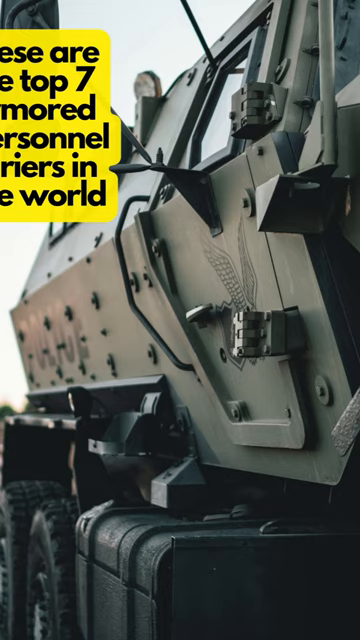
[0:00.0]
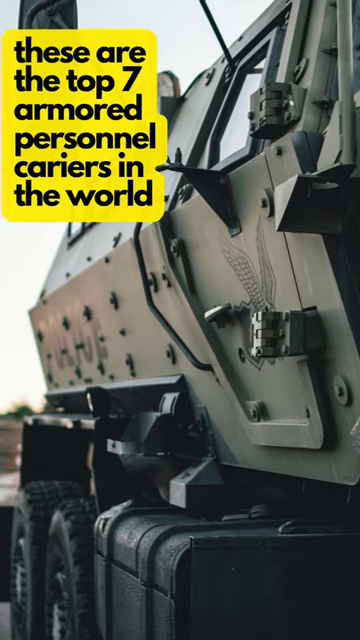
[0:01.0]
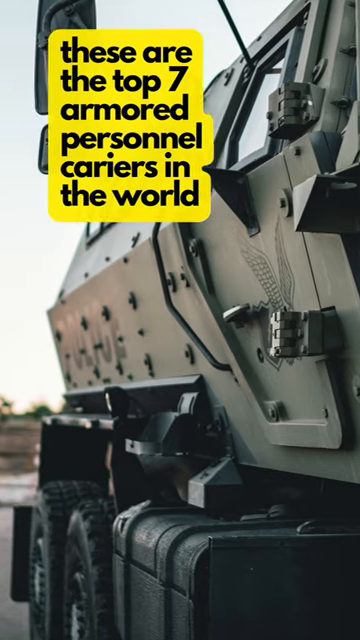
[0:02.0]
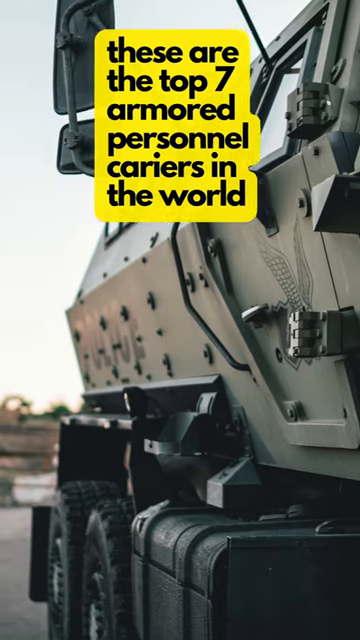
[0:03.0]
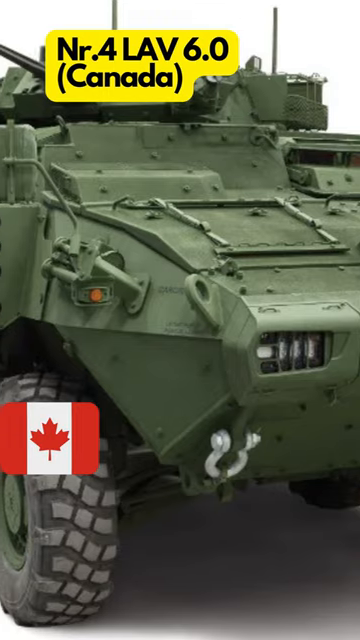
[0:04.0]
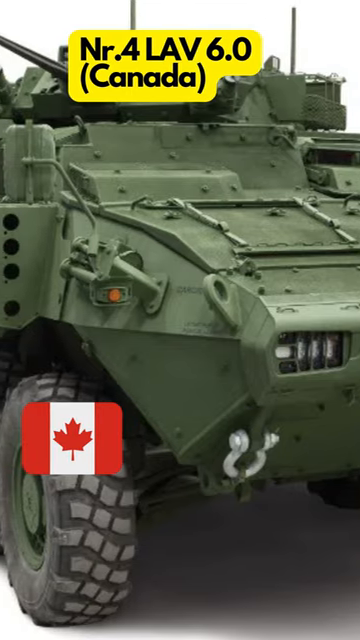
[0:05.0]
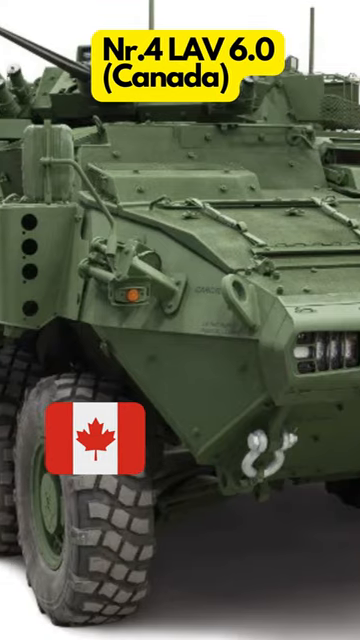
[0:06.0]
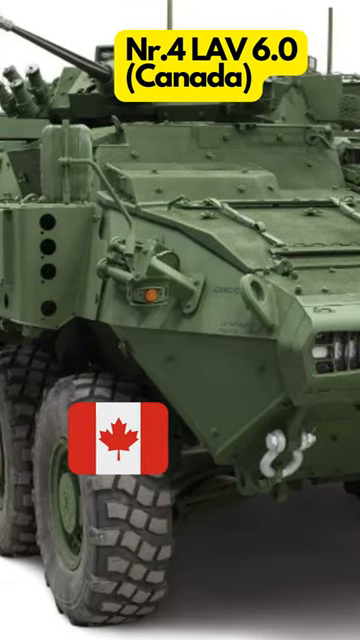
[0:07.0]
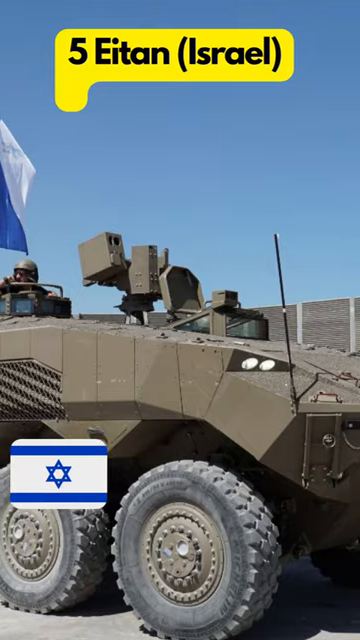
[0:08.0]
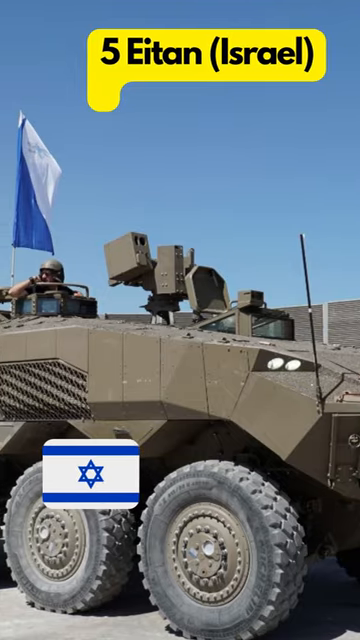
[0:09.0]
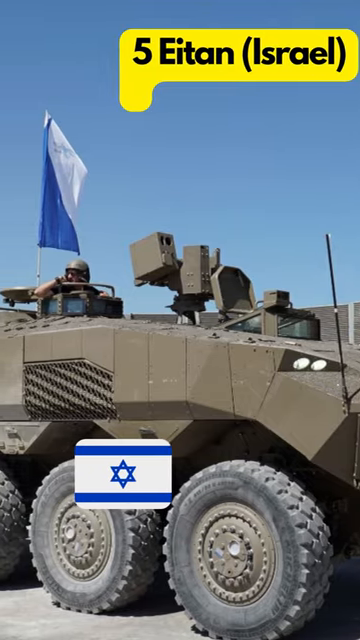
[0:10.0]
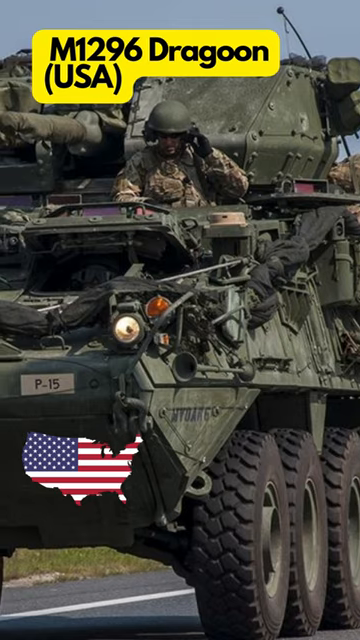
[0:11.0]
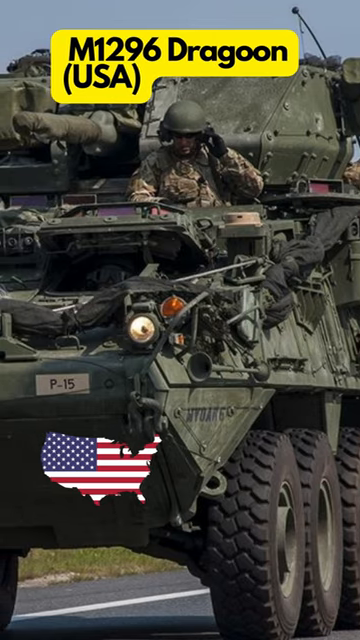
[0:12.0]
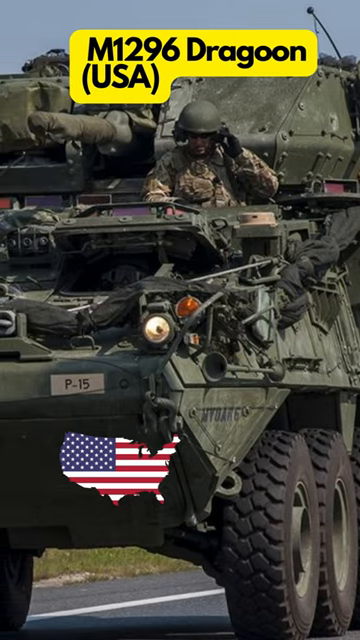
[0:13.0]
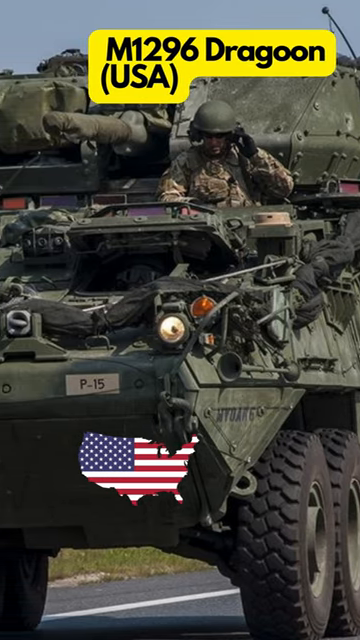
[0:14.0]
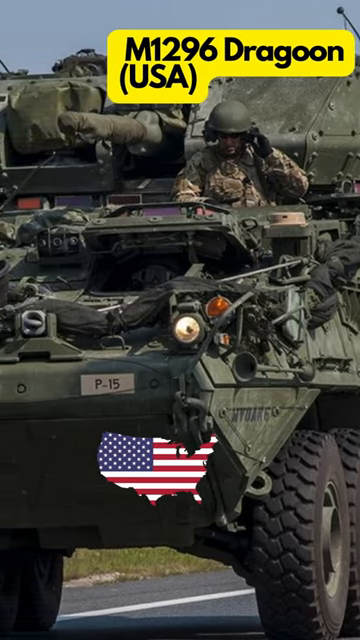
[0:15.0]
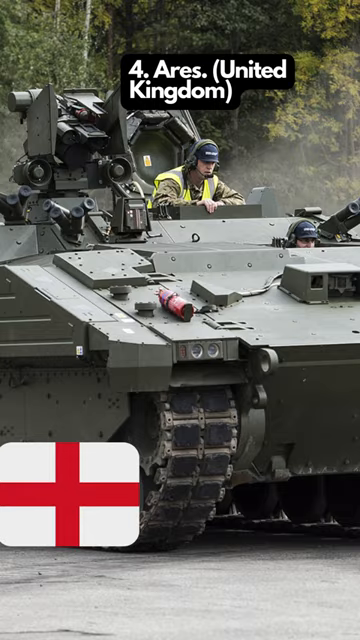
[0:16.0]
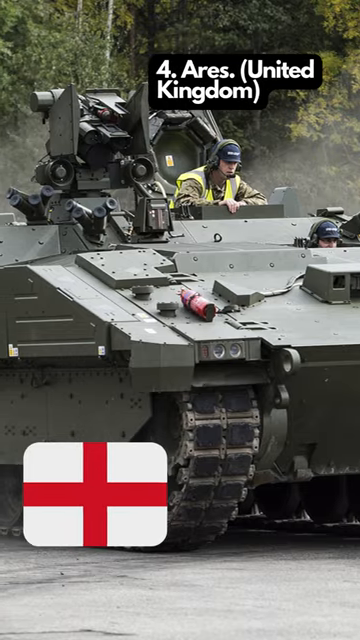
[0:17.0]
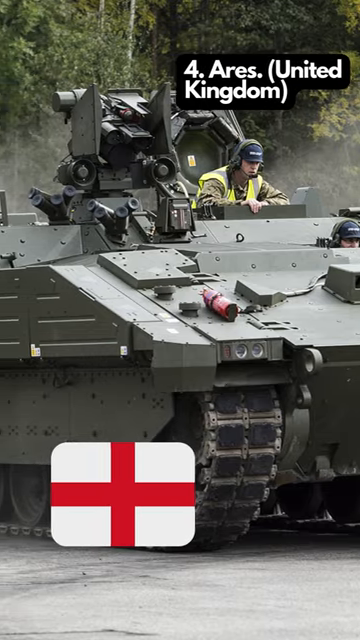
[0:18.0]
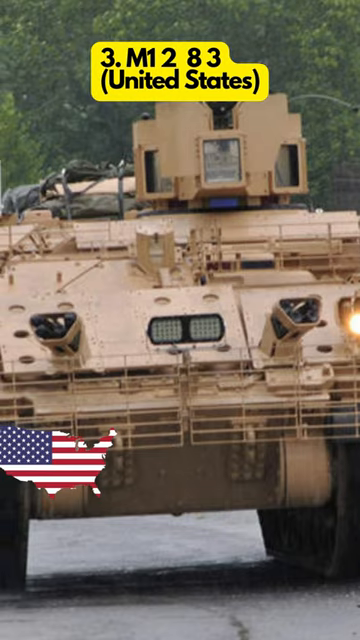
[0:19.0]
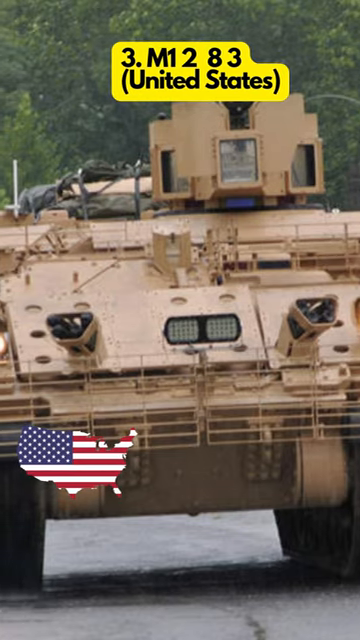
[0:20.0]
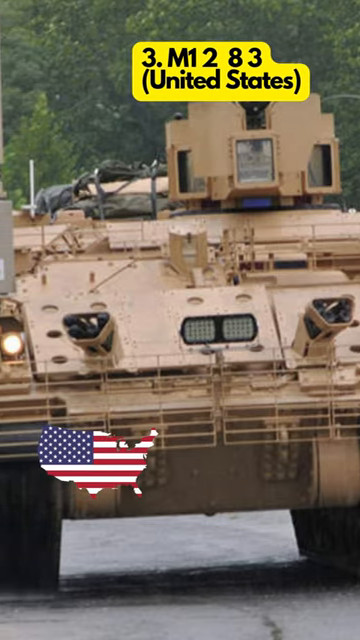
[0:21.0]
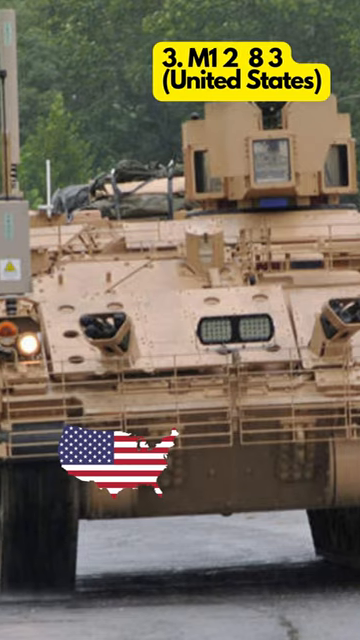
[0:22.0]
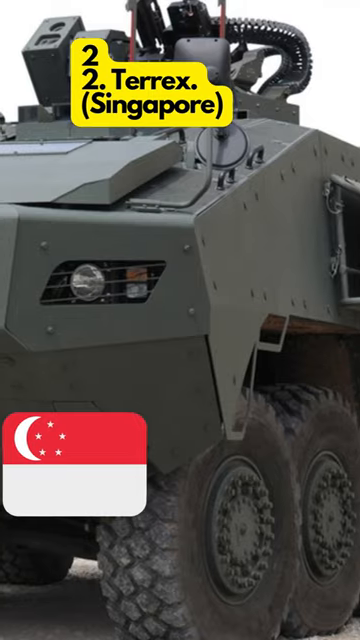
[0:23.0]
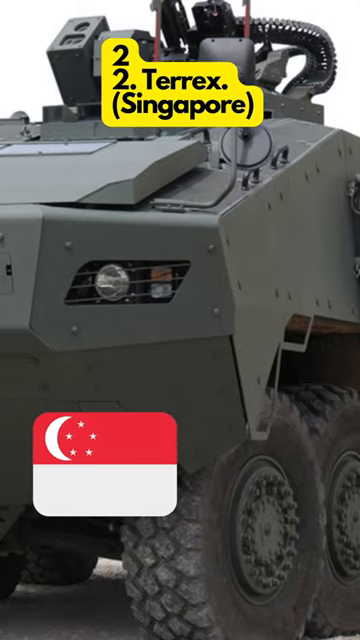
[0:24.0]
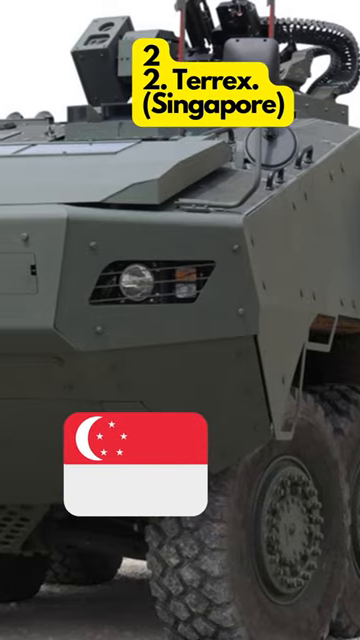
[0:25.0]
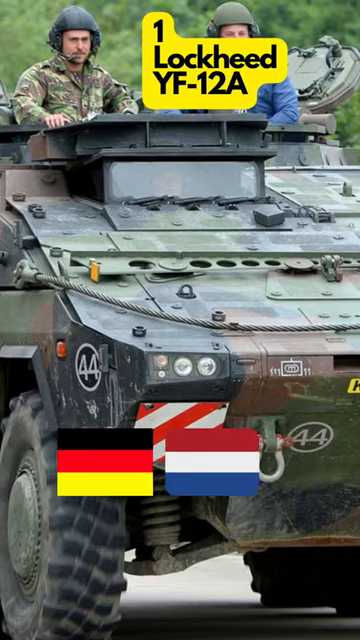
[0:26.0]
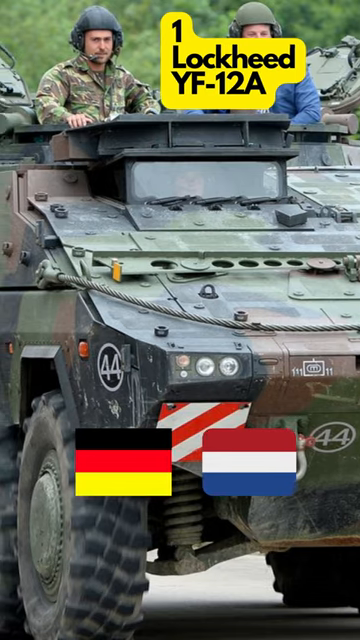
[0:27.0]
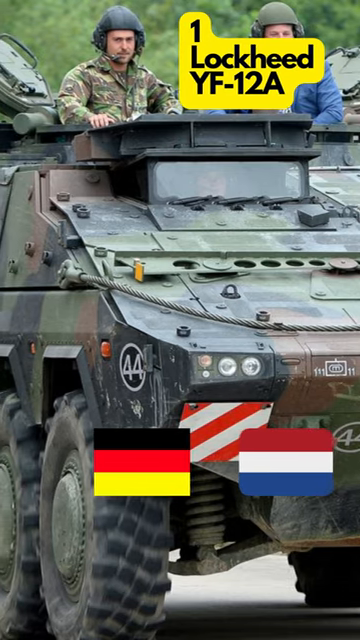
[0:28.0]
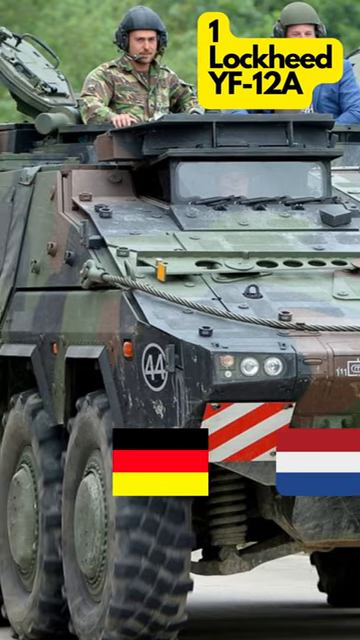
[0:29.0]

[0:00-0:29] What appears to be a countdown list of the top 7 military armored personnel vehicles is shown. The first, at number 7, is from Canada, followed by one from the US, one from Israel, another from the US, one from the United Kingdom, one from the United States, one from Singapore, and finally one apparently from Germany. As the list goes on, the vehicles have more weapons and seem to be able to carry more personnel.